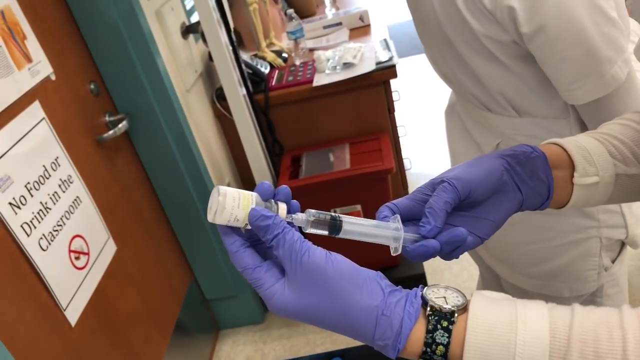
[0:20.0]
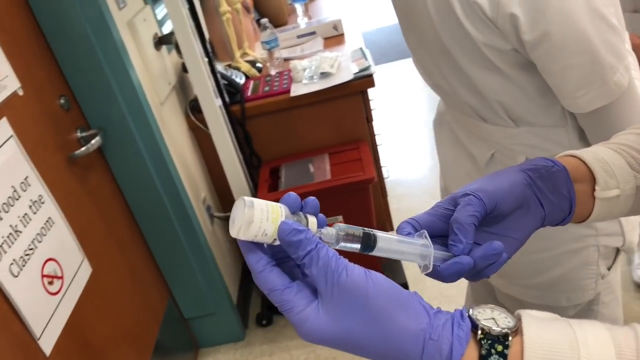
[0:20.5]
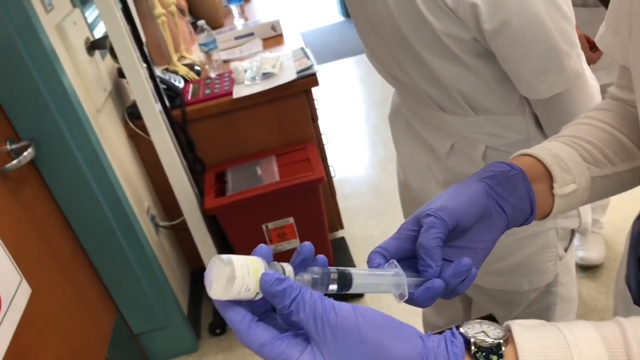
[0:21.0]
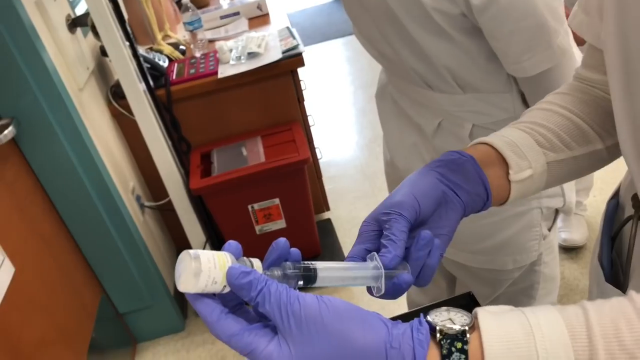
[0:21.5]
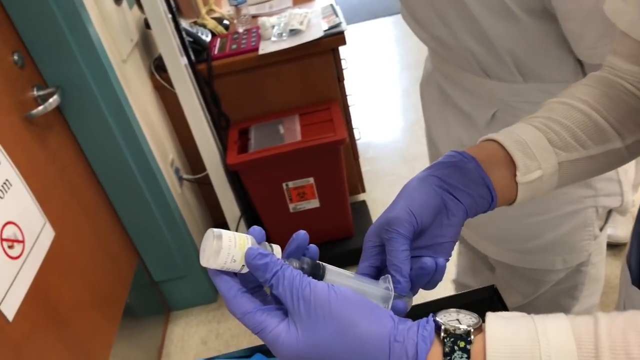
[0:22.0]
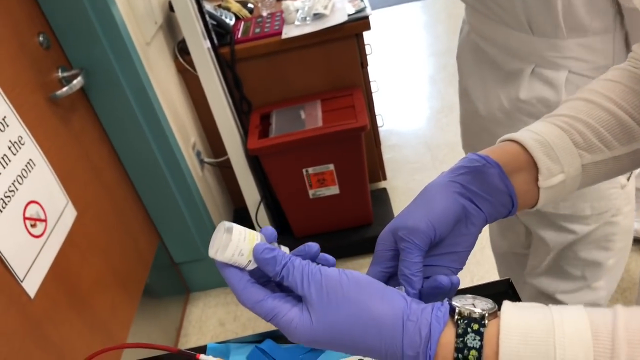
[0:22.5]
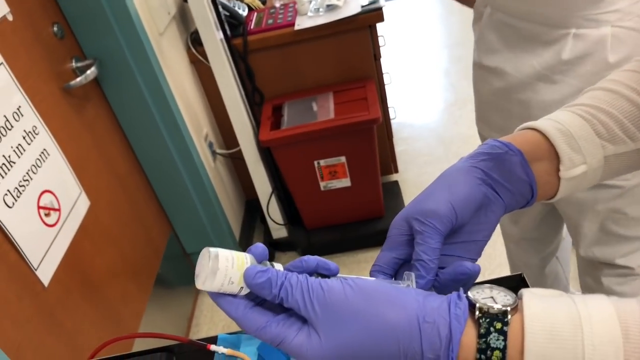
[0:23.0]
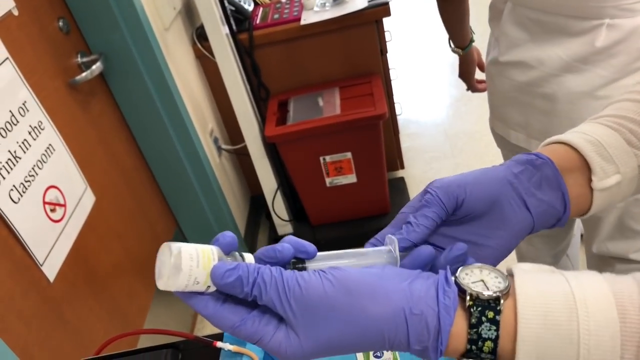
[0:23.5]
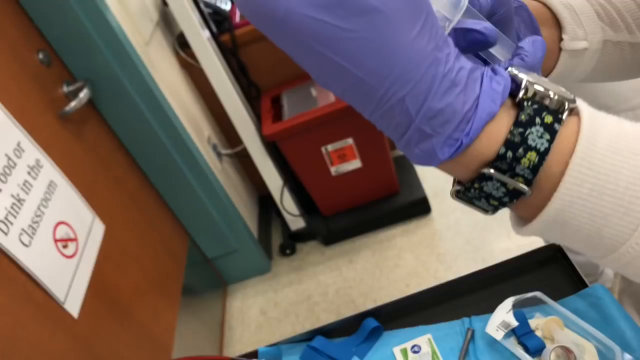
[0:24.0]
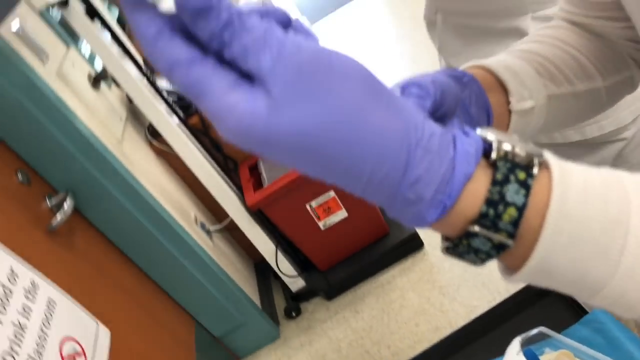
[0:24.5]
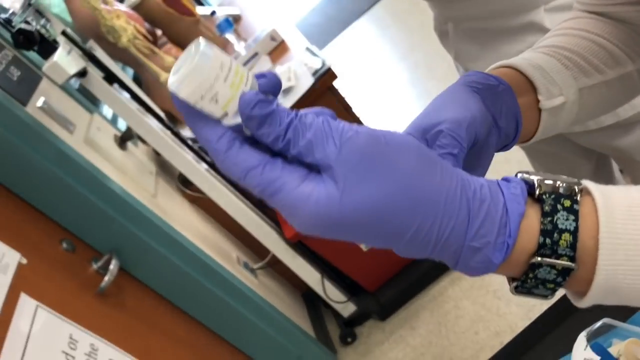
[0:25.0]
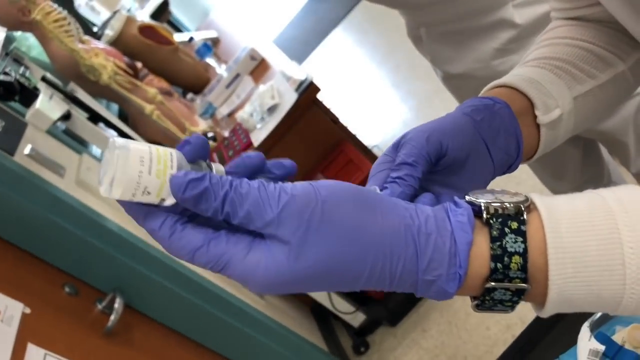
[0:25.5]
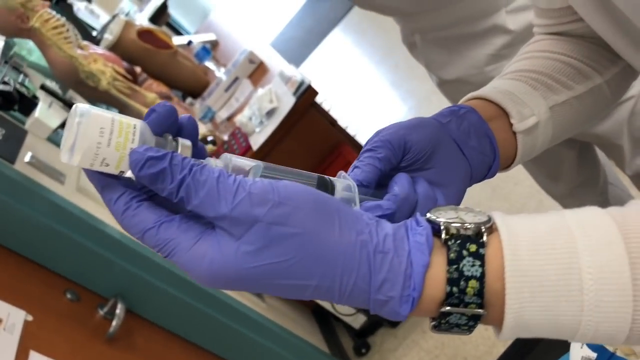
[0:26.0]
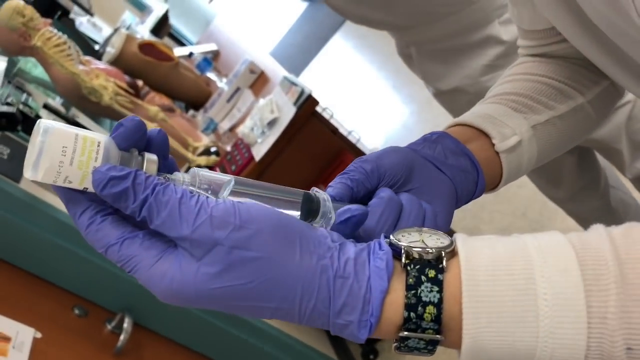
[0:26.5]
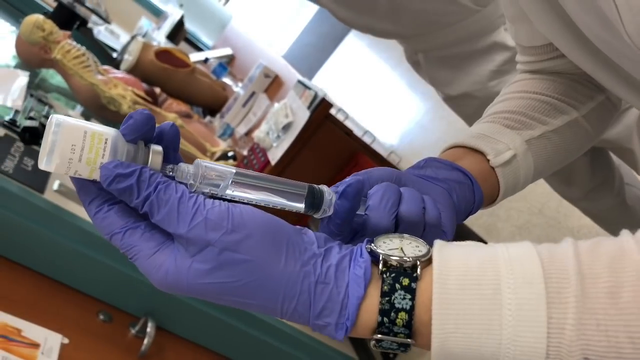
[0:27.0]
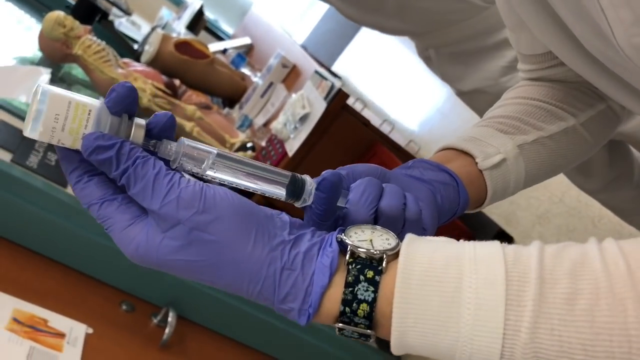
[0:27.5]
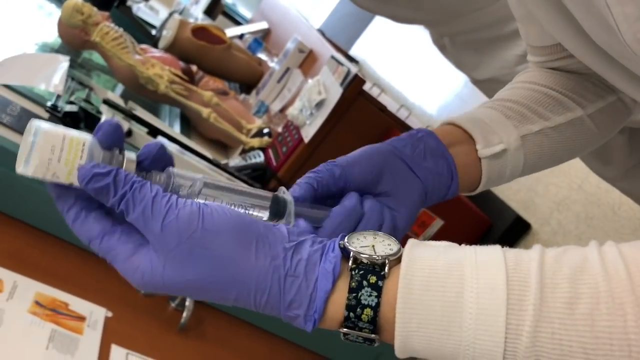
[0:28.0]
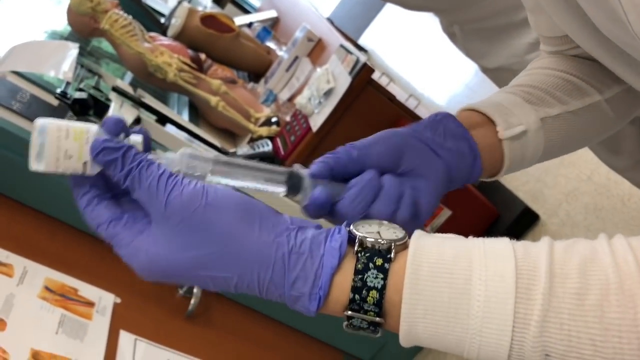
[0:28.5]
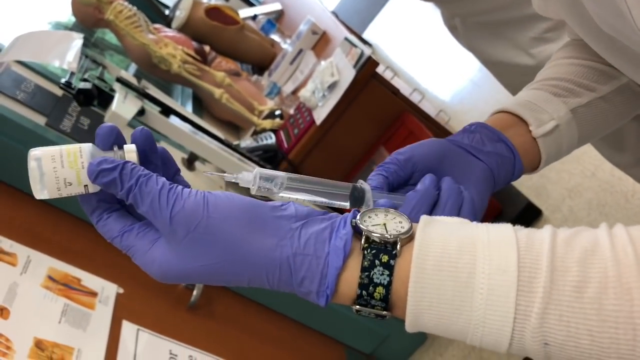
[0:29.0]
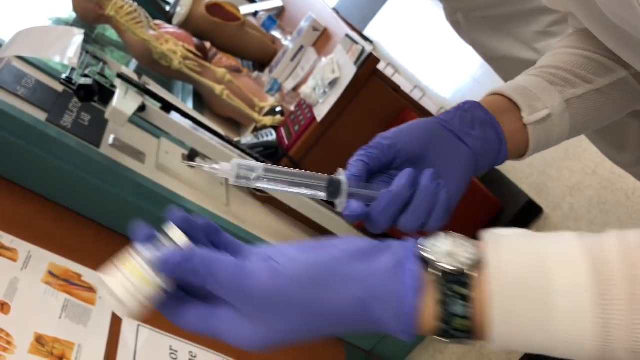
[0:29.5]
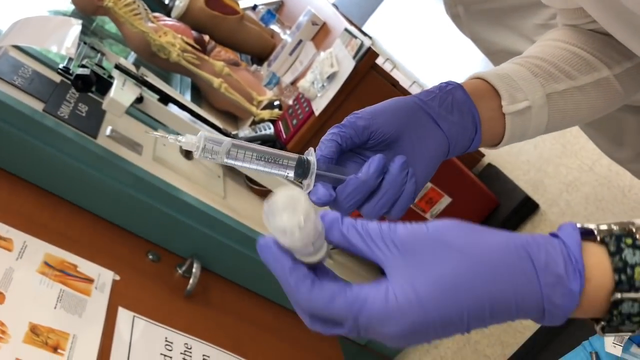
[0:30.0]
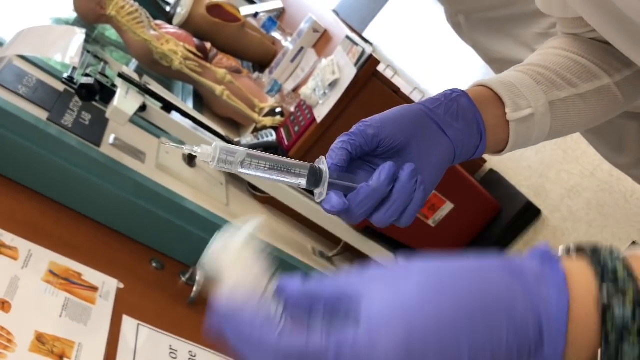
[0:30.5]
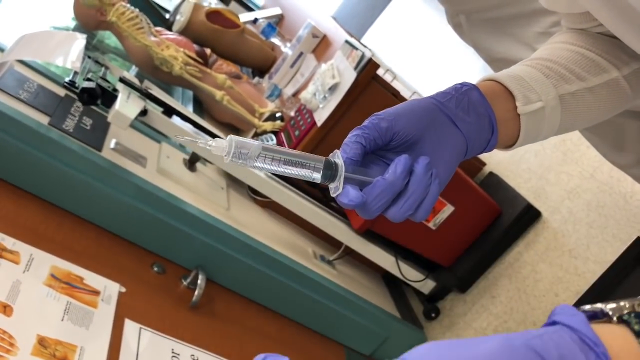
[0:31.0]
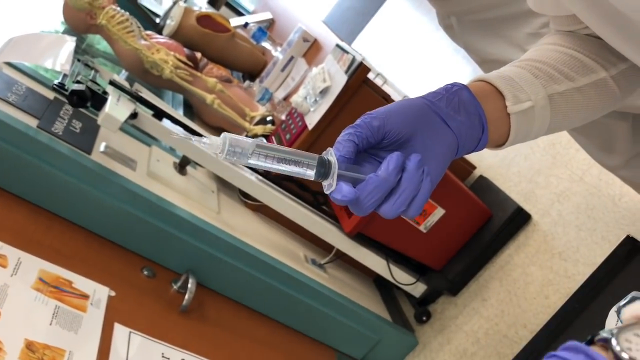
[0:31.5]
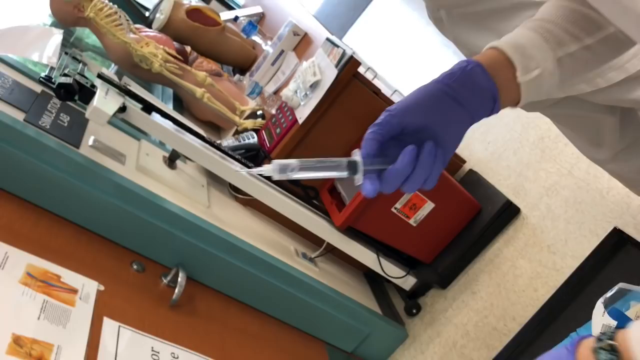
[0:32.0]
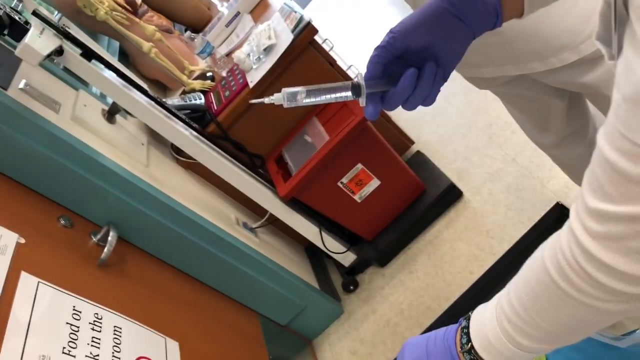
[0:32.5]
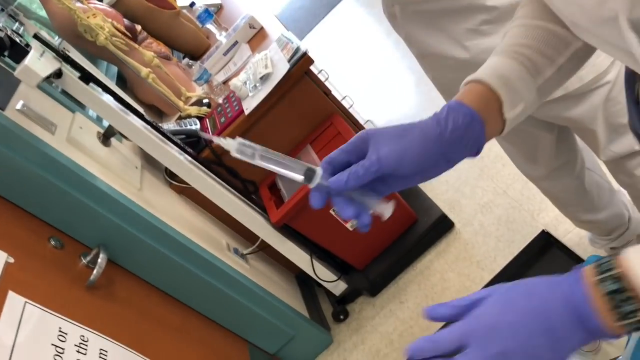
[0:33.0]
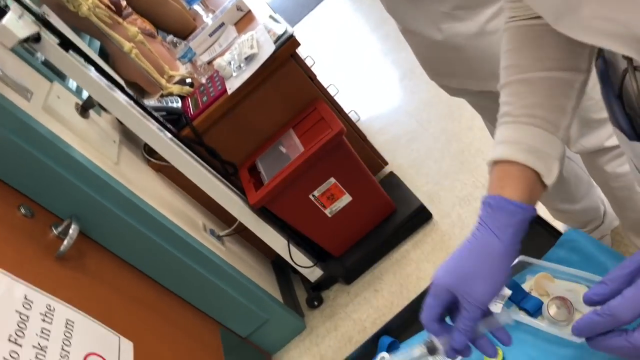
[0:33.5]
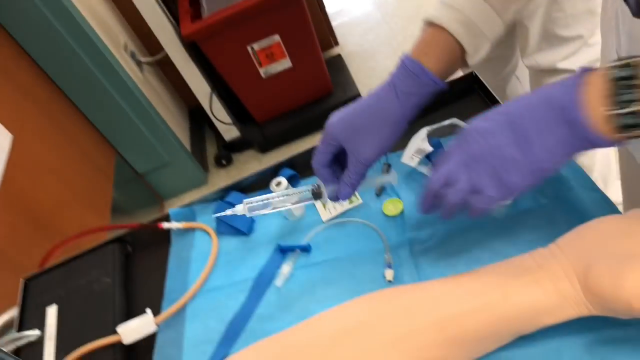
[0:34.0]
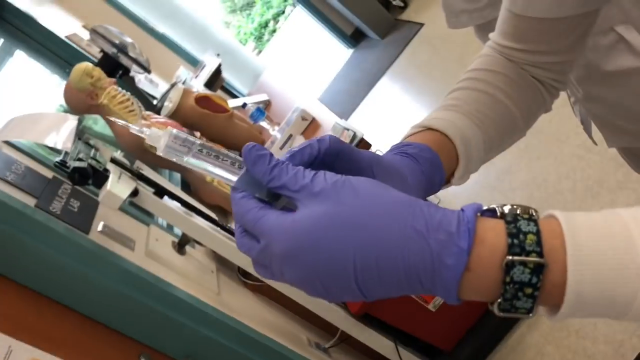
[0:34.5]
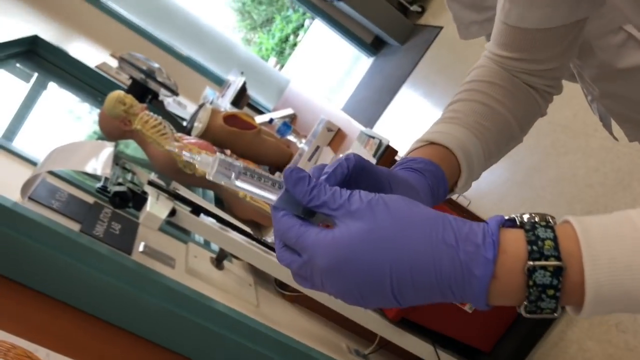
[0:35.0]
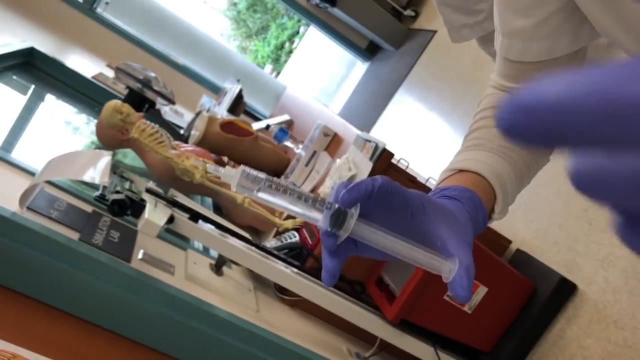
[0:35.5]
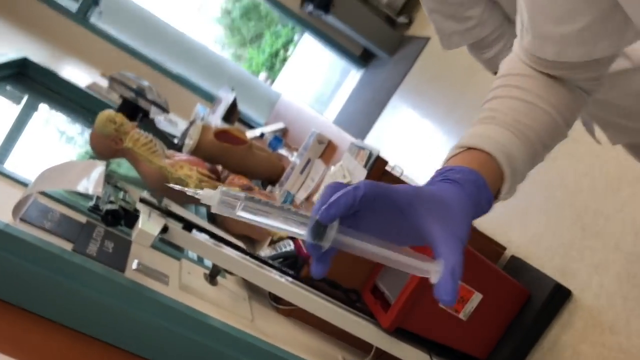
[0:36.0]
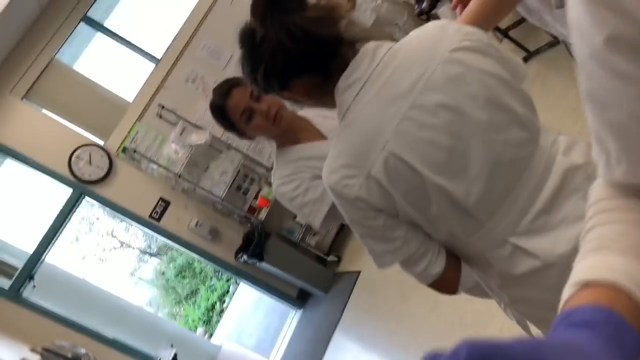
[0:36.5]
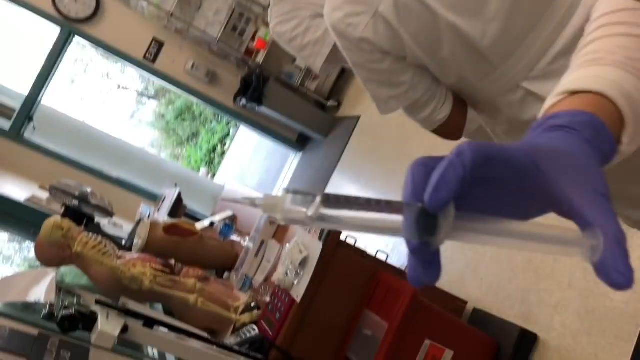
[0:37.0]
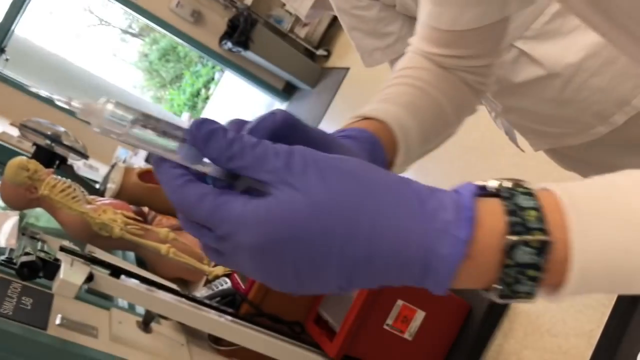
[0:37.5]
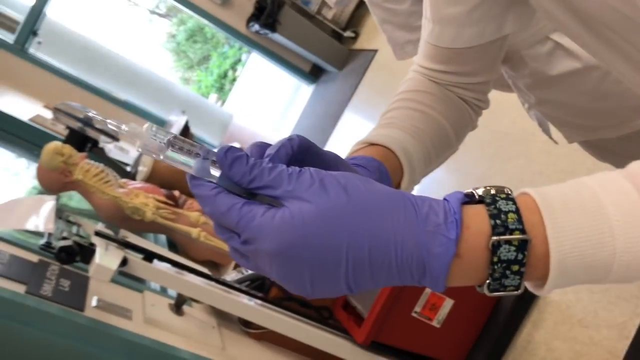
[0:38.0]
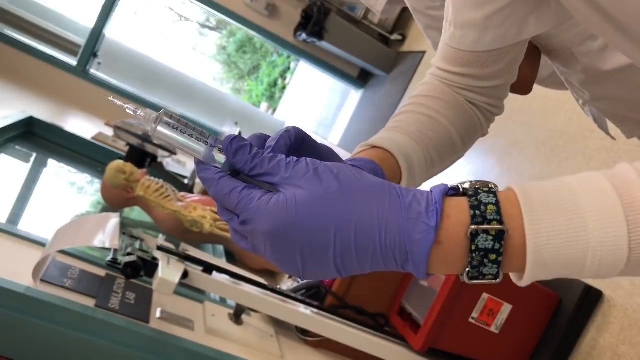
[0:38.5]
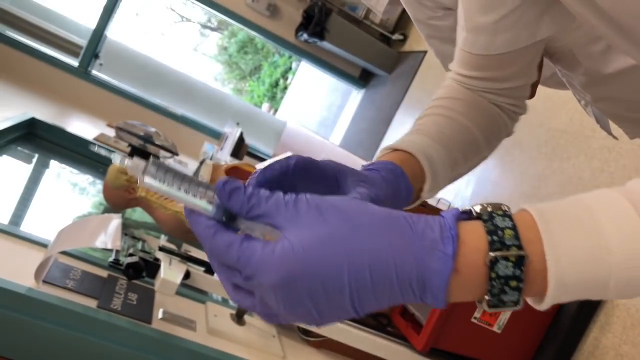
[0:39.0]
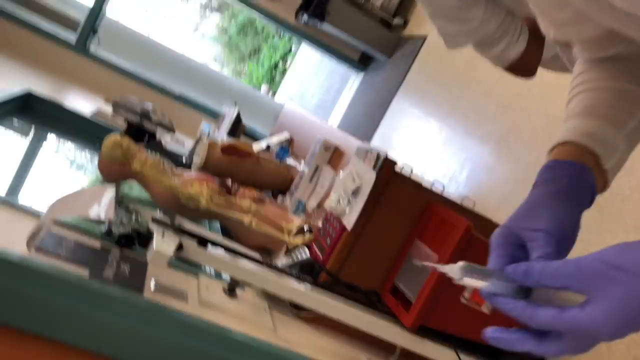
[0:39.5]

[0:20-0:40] The medical professional holds a needle in the right hand and the vial in the left. The vial is clear with clear liquid. She lays the vial down onto the cart on top of the blue medical mat with her left hand, takes the syringe with the needle in her right hand, and pushes the liquid up out of the needle until all of the air in the syringe has escaped and only liquid is left. In the background is a red door with green trim, with a laminated sign posted on it saying "No food or drink in the classroom" and displaying an image of a red circle with a red line through it. The medical professional wears an analog wristwatch on her left arm with a floral print on the watch band. A closed red hazard bin is also in the background.